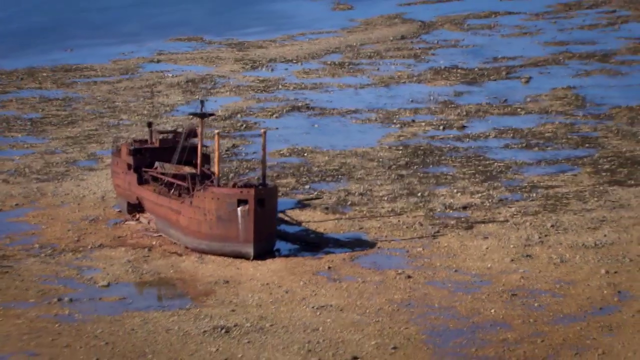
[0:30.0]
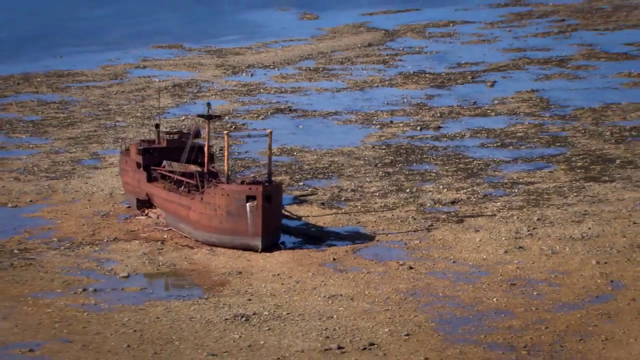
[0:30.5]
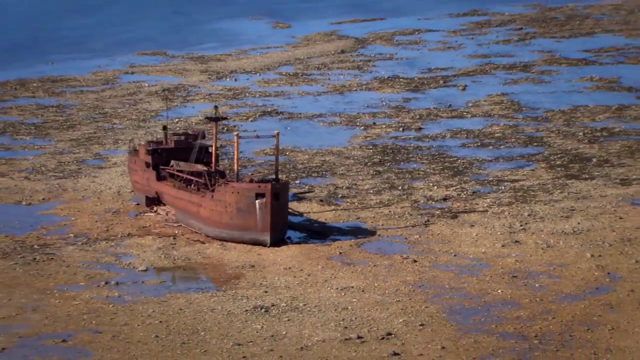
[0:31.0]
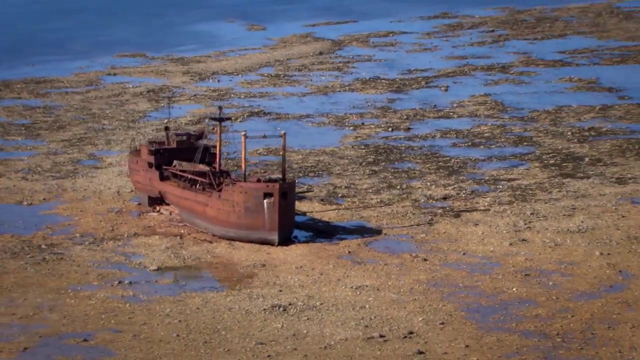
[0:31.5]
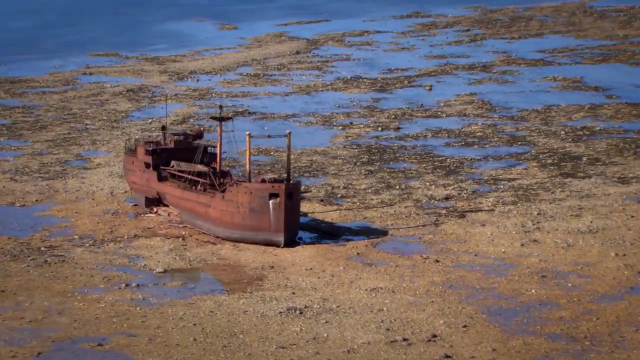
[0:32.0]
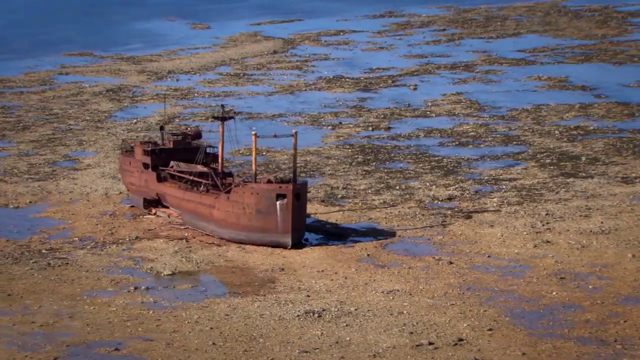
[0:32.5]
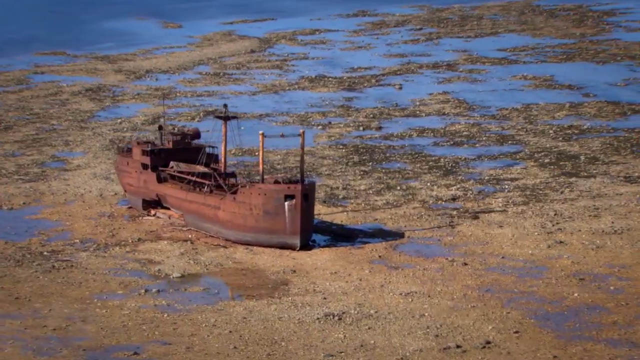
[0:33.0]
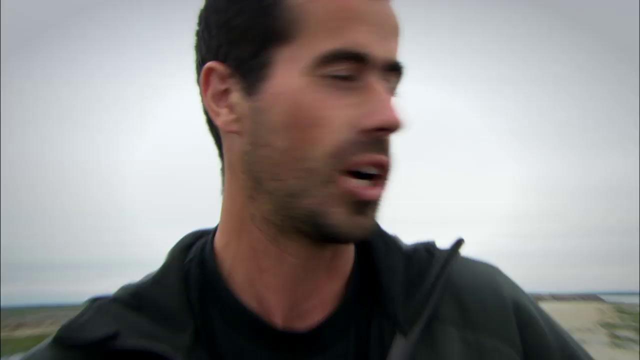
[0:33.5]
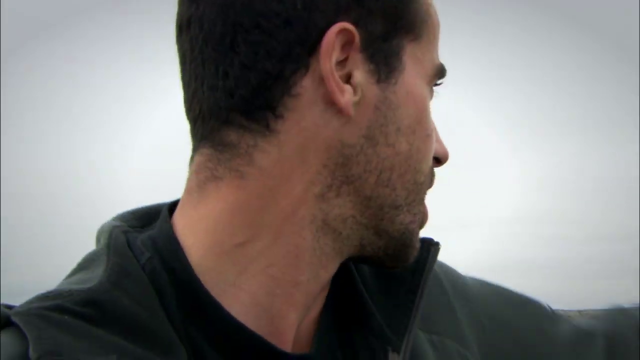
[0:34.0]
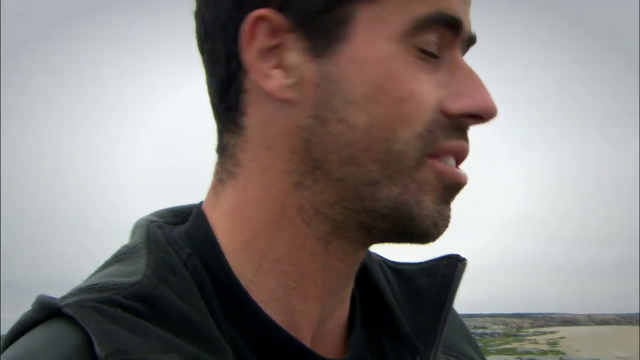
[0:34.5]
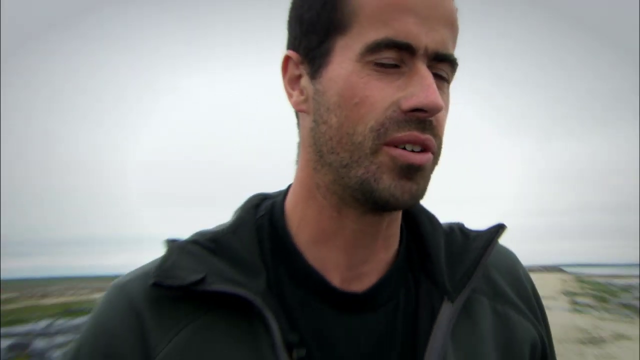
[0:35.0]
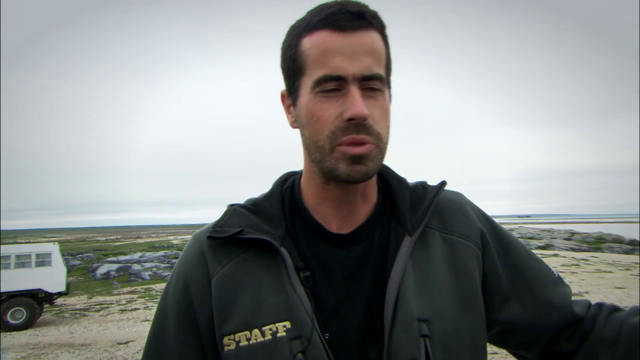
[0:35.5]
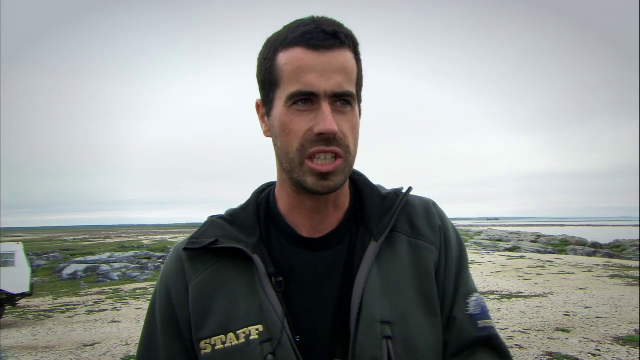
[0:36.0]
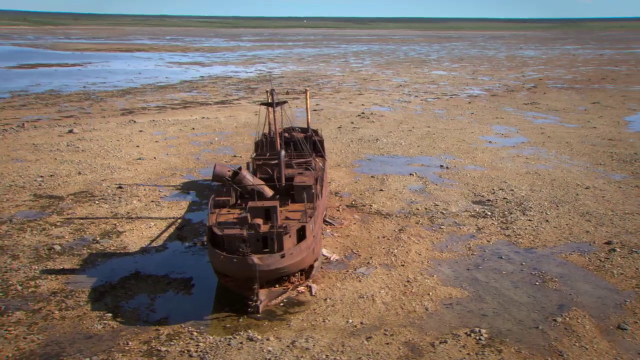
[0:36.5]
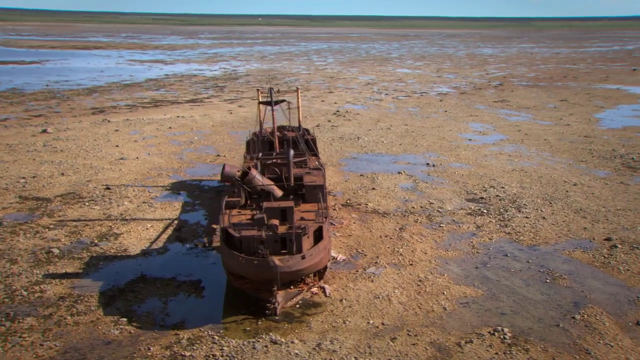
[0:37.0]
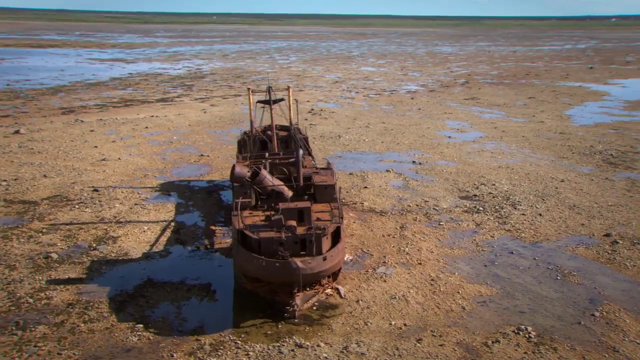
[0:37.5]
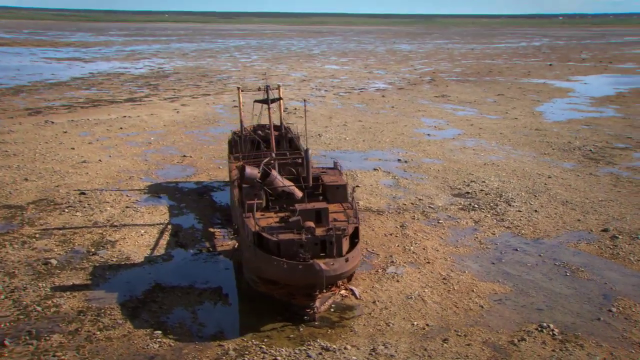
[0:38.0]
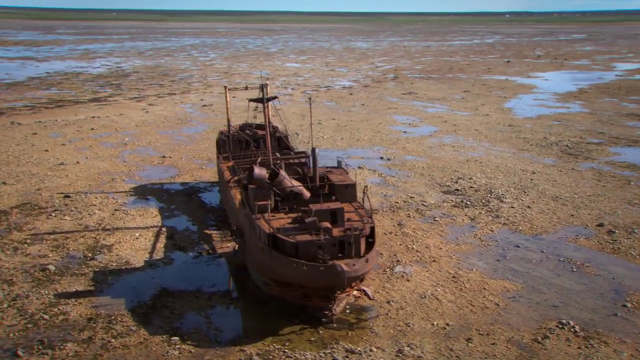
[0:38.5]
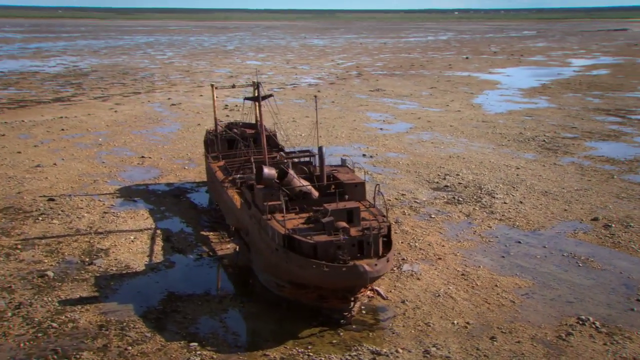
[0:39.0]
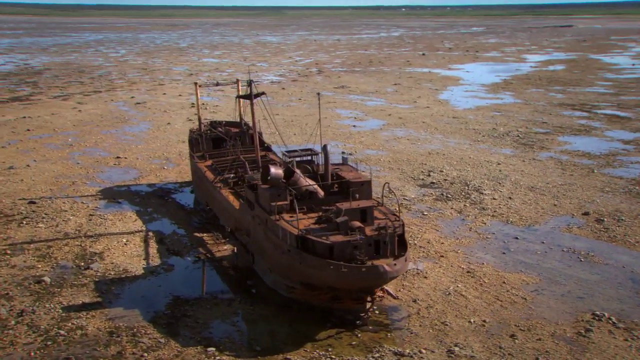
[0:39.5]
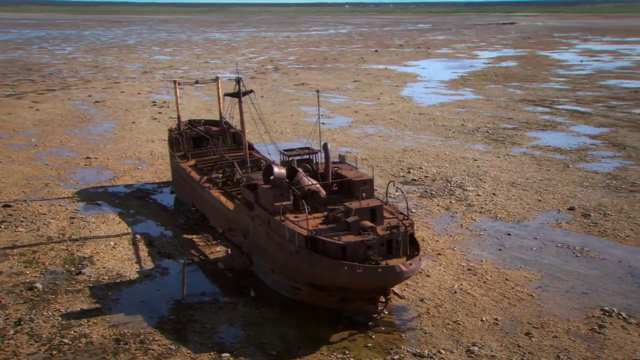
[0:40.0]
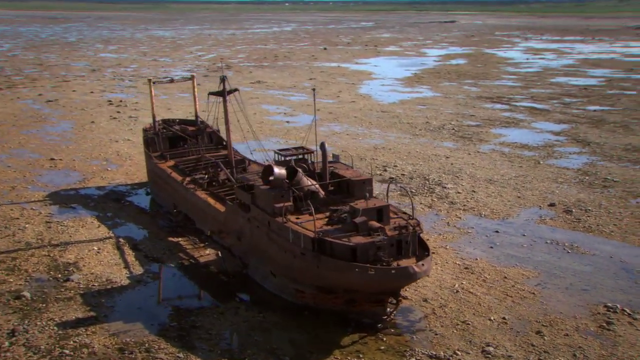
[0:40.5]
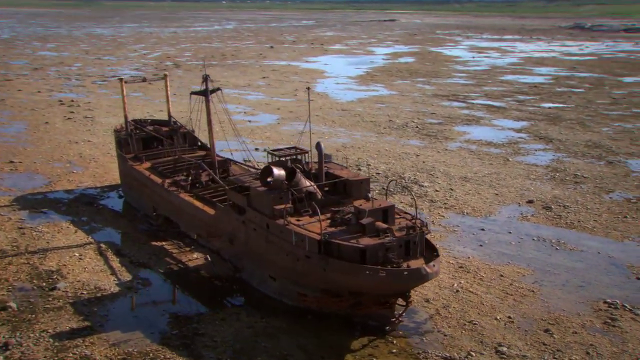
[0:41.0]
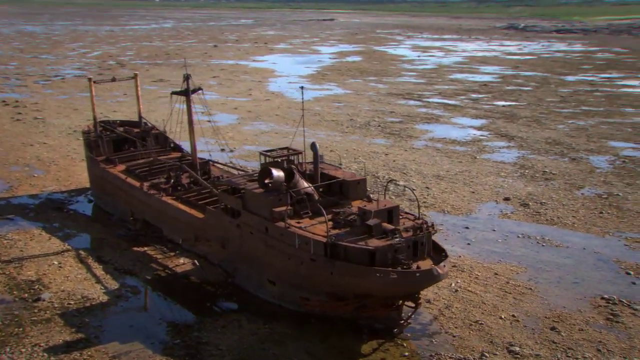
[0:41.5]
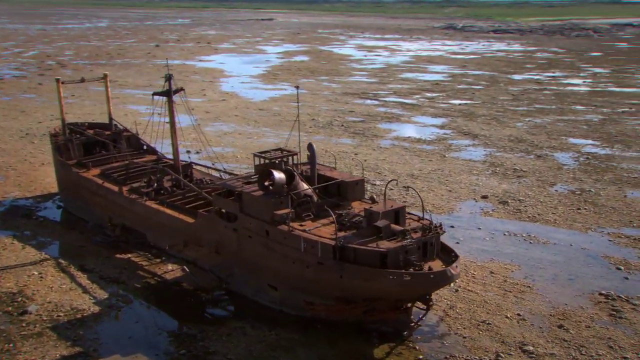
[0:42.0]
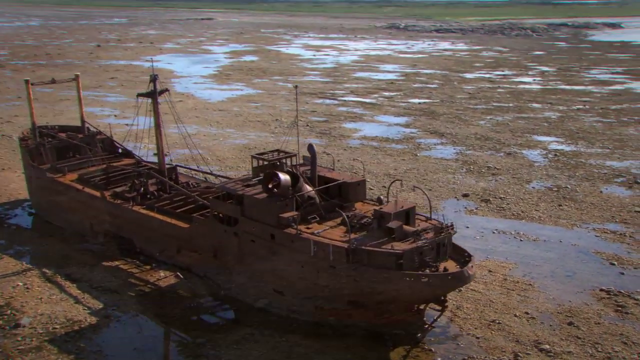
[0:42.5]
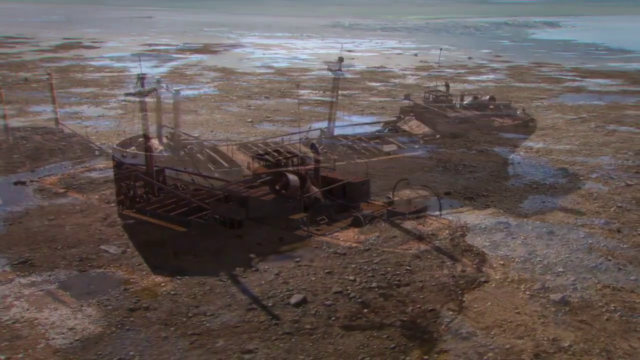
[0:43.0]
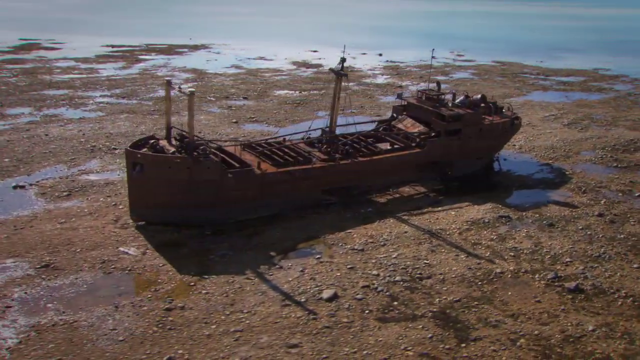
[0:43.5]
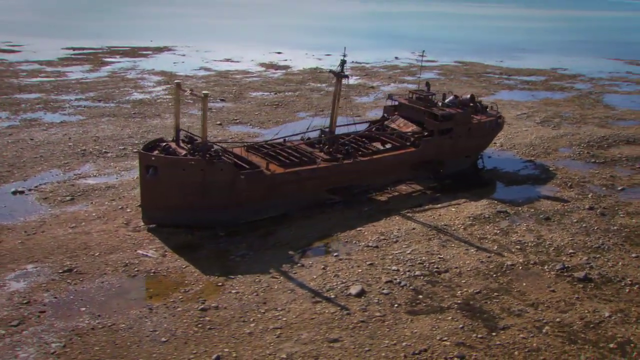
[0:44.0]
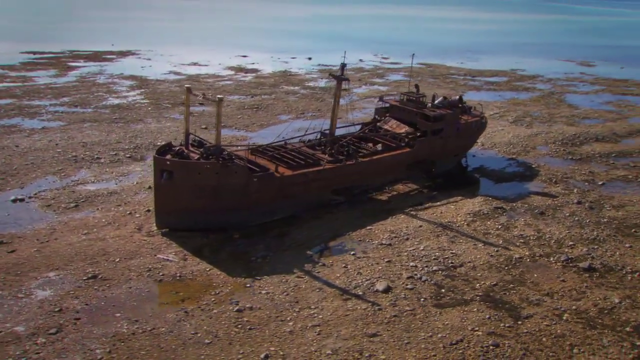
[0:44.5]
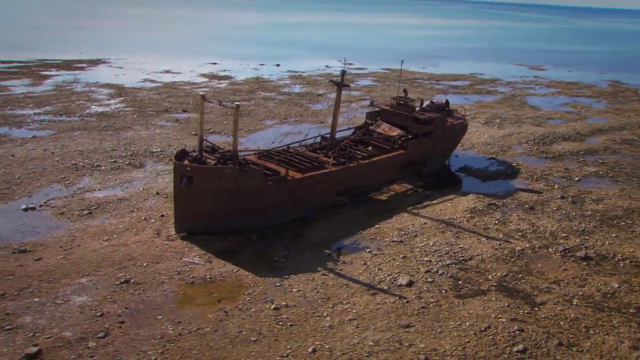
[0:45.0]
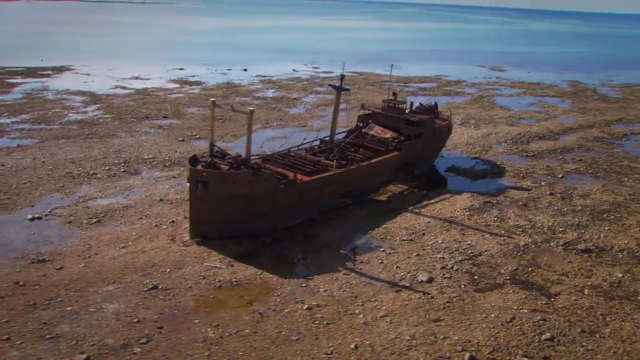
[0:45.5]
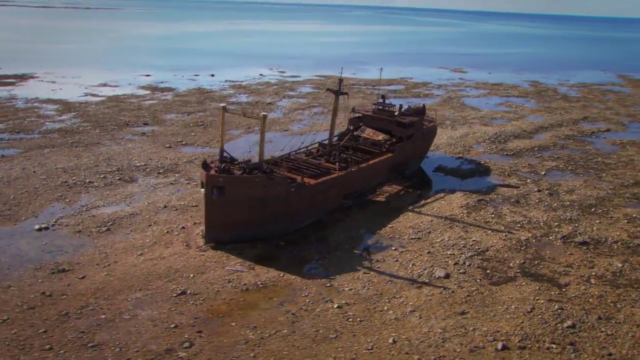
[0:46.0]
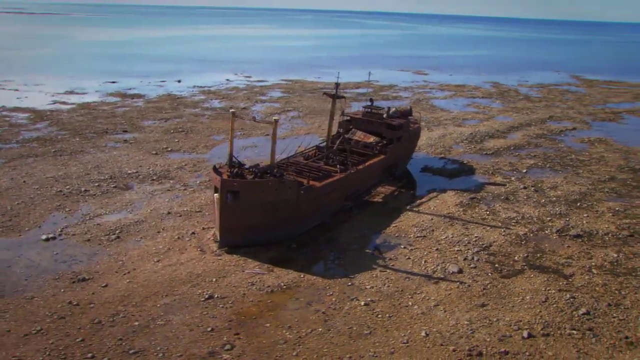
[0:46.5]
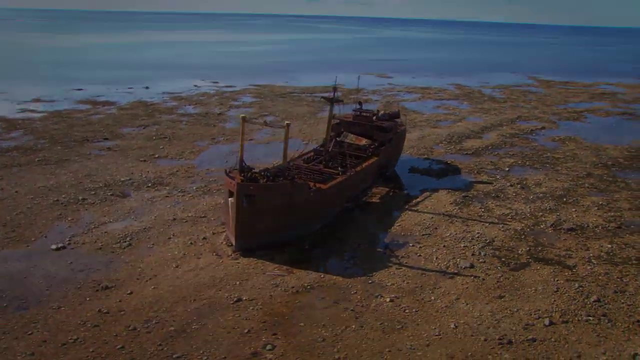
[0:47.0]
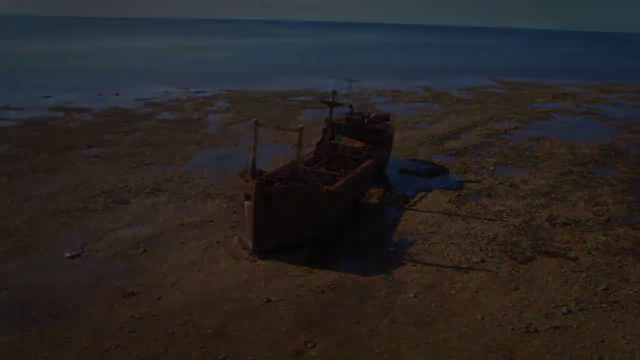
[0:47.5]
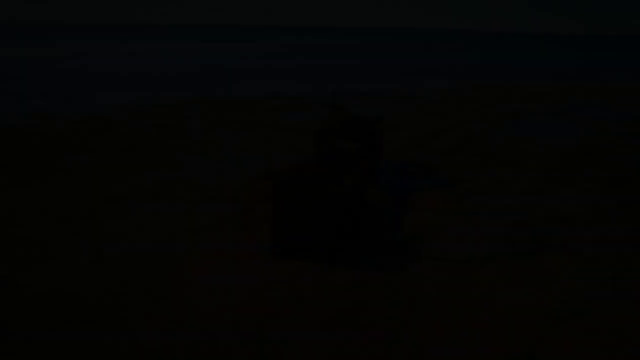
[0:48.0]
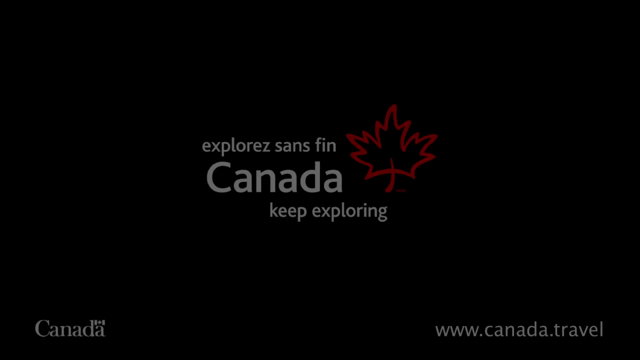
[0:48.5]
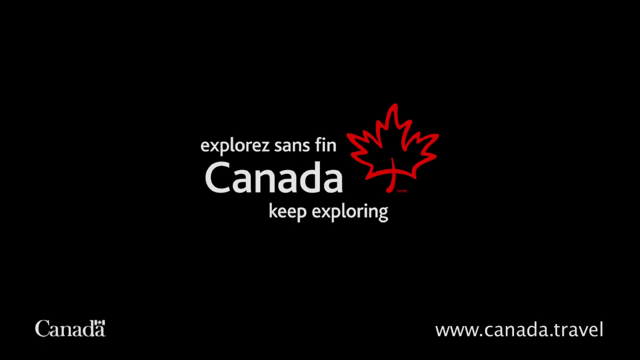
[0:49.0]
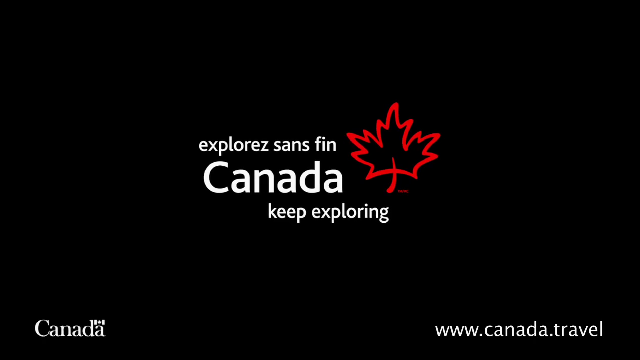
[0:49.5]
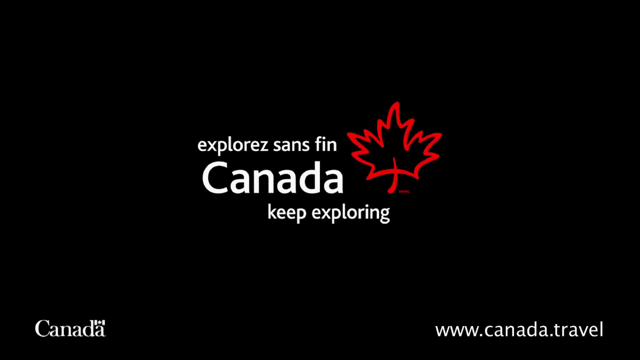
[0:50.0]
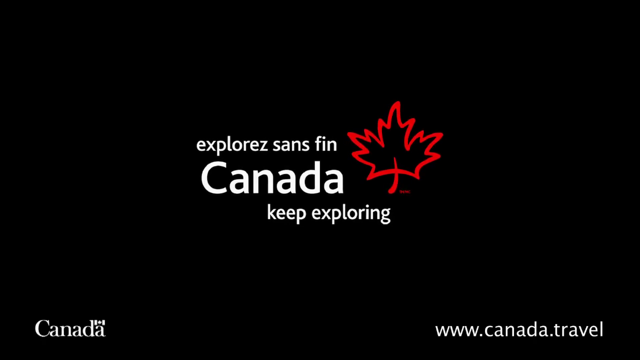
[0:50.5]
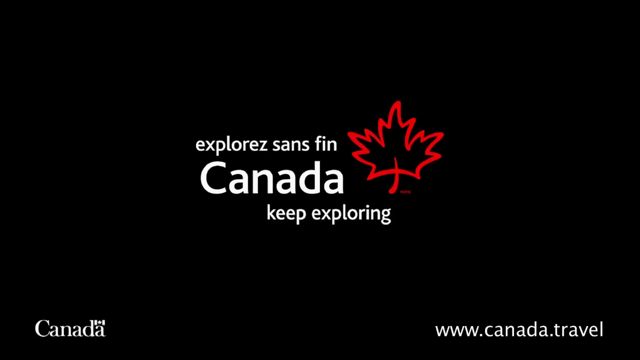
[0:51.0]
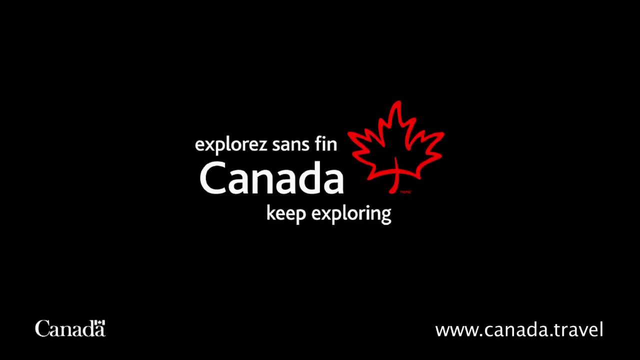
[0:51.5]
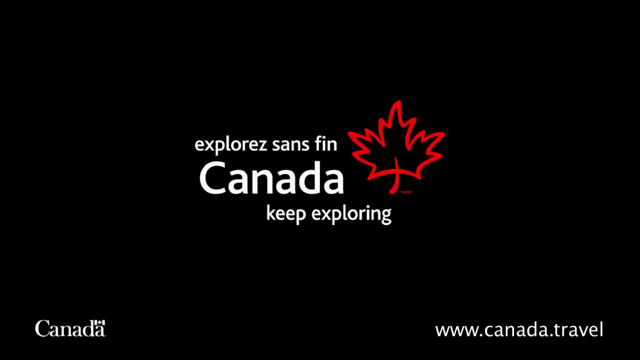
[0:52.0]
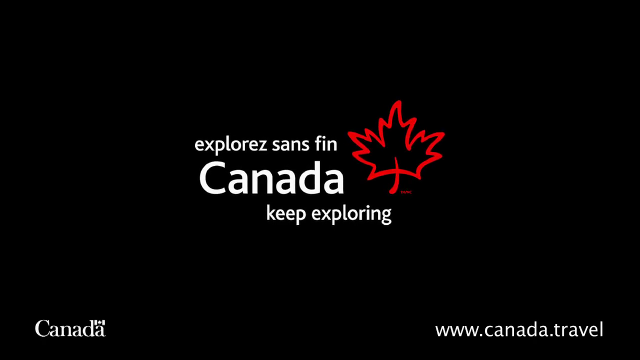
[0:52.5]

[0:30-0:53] More aerial views pan and rotate around the abandoned ship. A close-up then shows the man with very dark hair and the army green jacket; he has very thick eyebrows, a slight mustache and beard, and five o'clock shadow, and he uses his arms as he talks. The video returns to an aerial view of the ship, somewhat closer but never getting too close, probably drone footage. The screen then turns black and white lettering in French appears, ending in "sans fin", followed by a larger bold white "Canada" with "keep exploring" in English underneath. To the right of those words is a red maple leaf. The graphic and text stay in the center of the screen as the video ends.